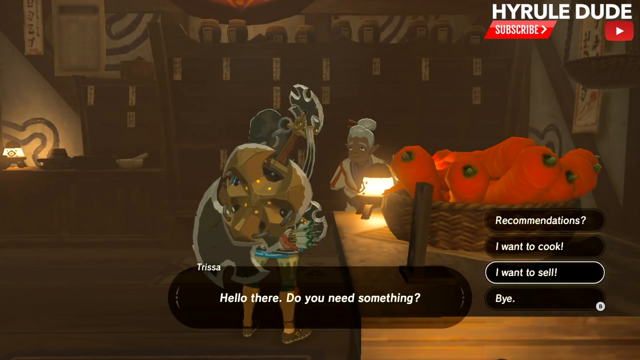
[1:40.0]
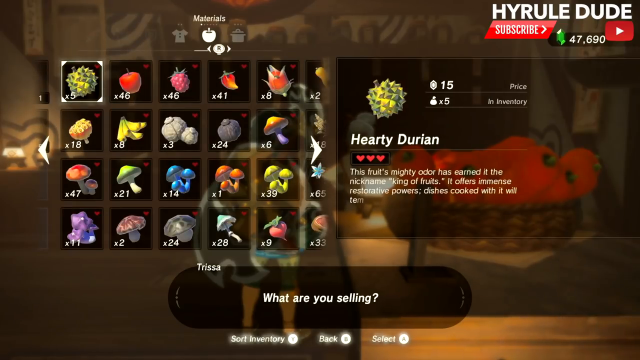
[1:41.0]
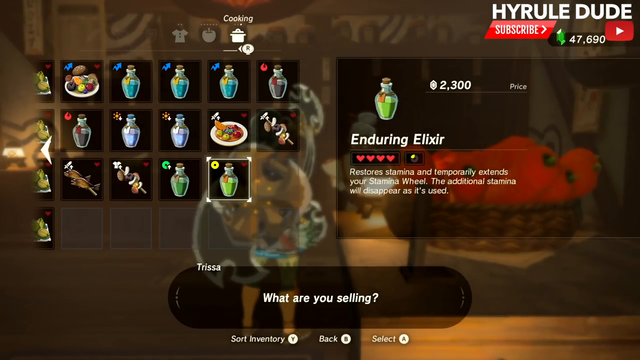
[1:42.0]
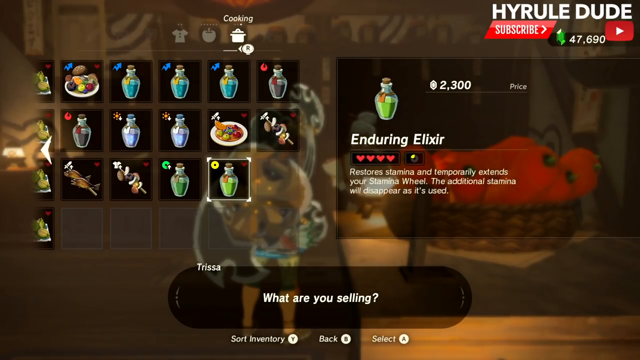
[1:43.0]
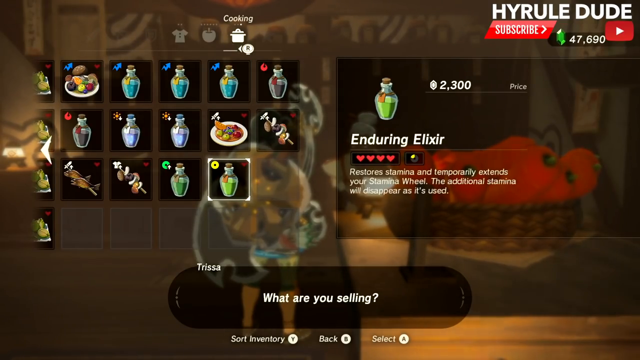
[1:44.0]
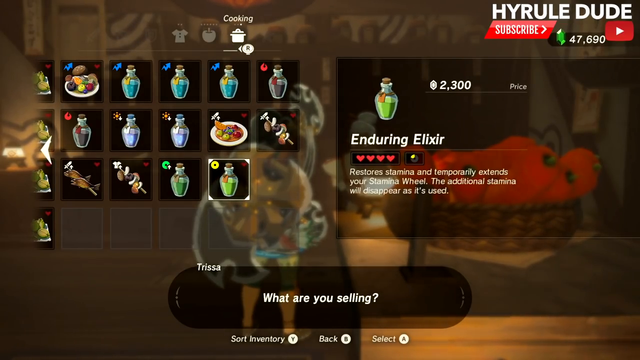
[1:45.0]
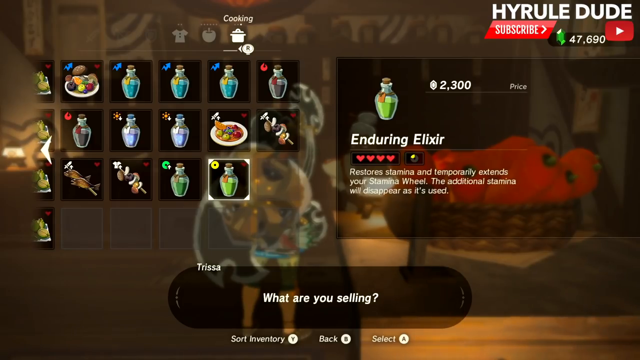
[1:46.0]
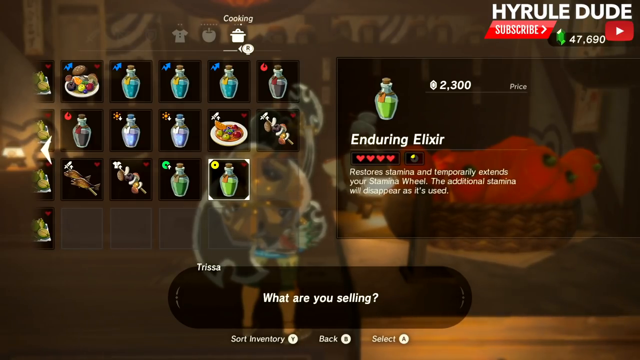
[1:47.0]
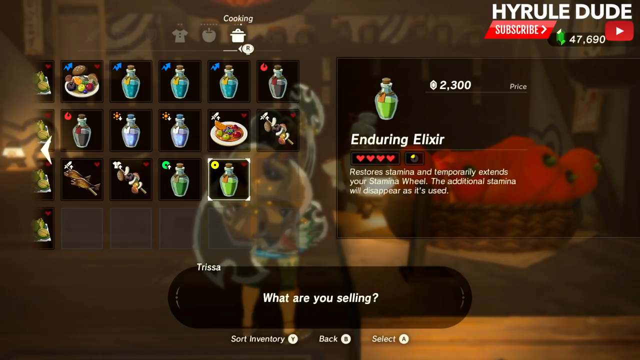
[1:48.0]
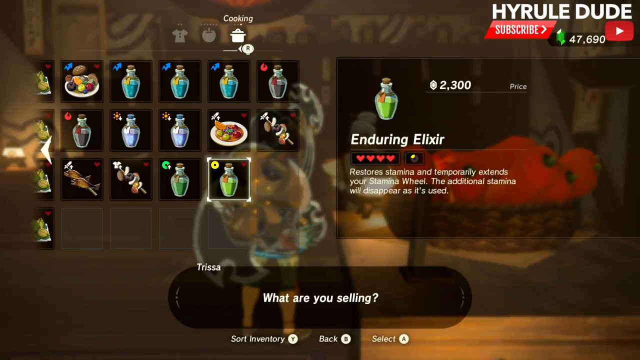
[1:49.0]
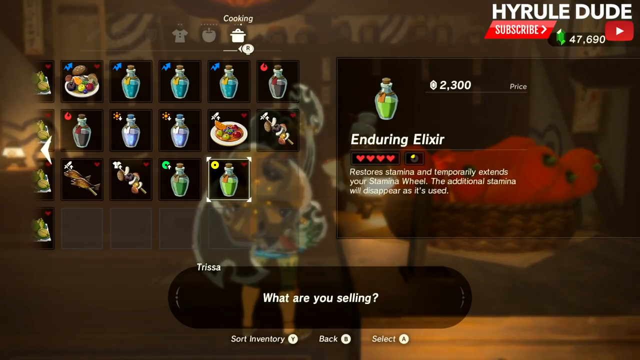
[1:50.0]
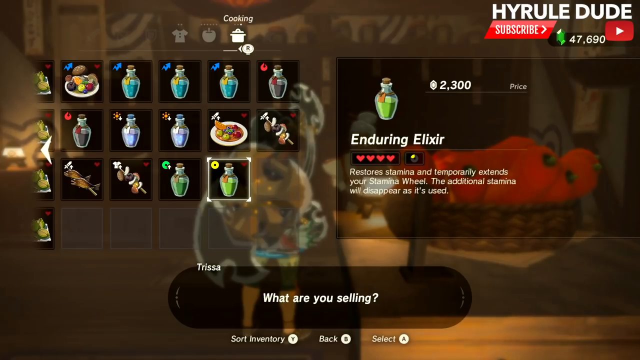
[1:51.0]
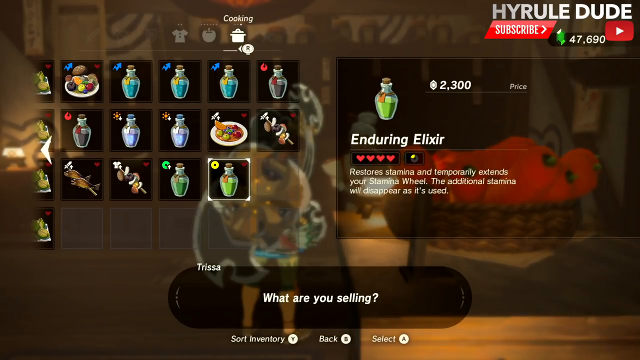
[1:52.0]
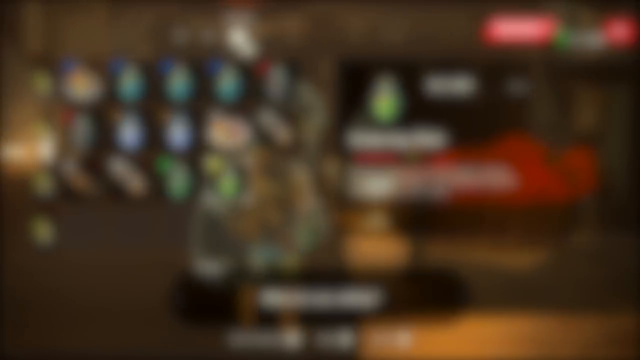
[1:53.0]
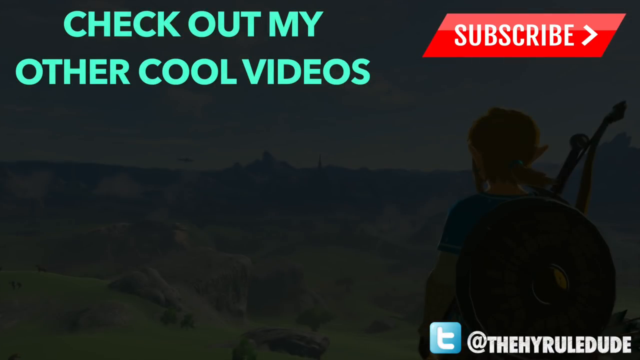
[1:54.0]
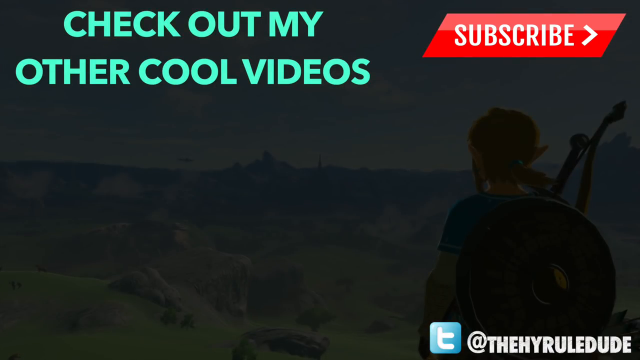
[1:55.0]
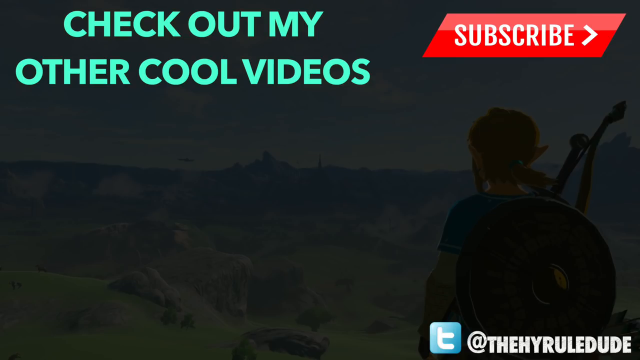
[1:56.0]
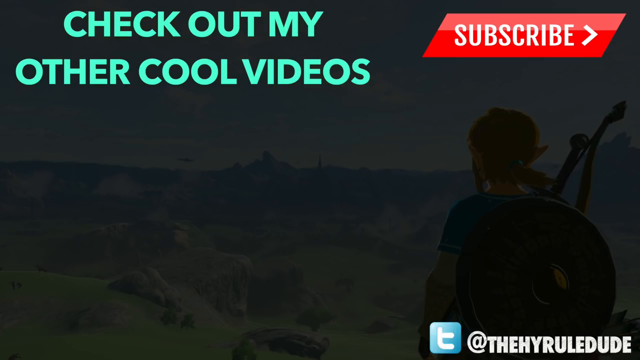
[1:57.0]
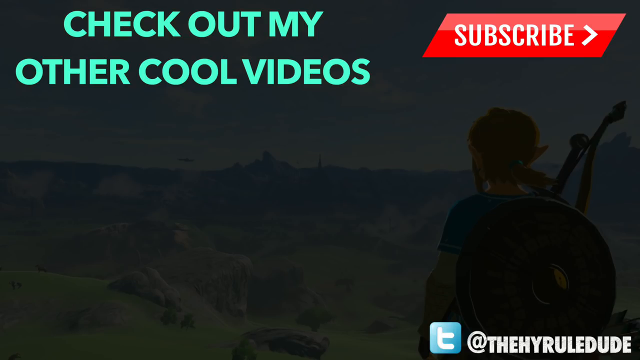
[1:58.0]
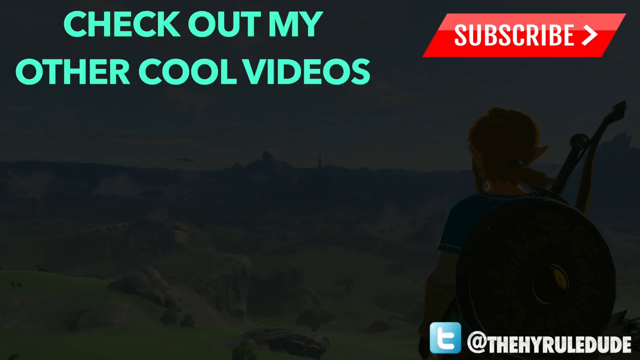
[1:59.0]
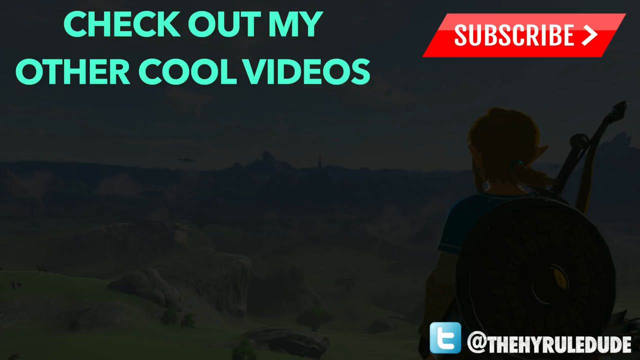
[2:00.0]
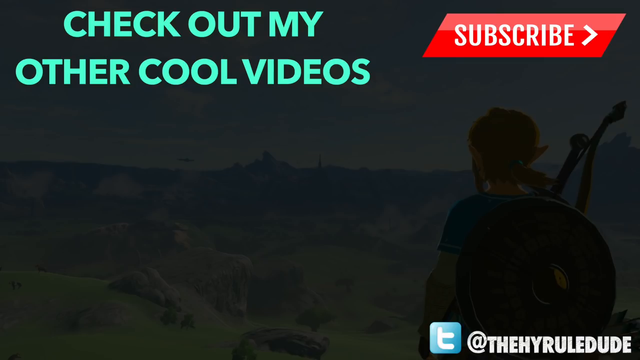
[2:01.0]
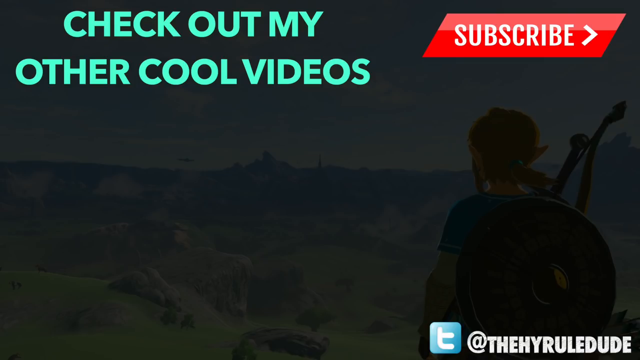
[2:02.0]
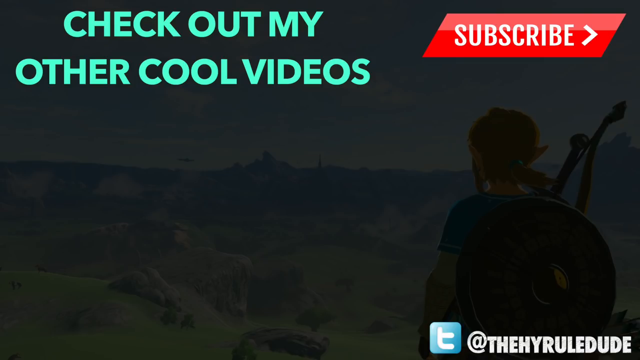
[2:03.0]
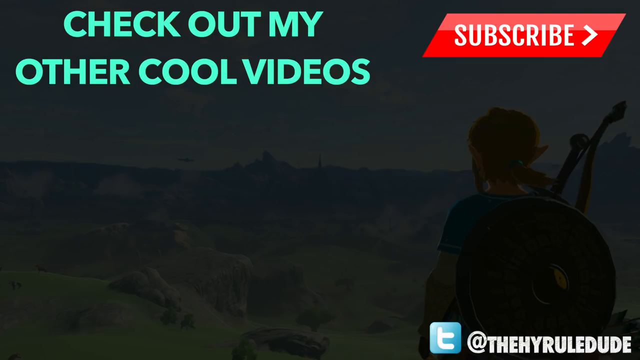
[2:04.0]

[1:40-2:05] The game shows the inside of a room, where an old woman with her gray hair pulled up in a bun sits at a table. On the table is a basket of large red-orange fruits or vegetables that sort of look like carrots. To the left is something that looks like a mask. A matrix of images then appears on the screen, including bottles and plates of food, and a green bottle is highlighted. On the right side is the green bottle, with white text below it reading "Enduring Elixir, restore stamina and temporarily extends your stamina." At the bottom of the screen is written "What are you selling?" This stays on screen for a few seconds until the video ends.